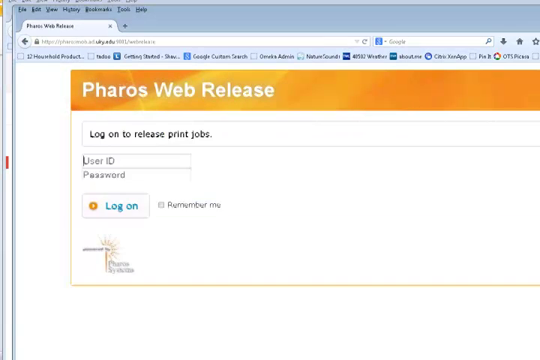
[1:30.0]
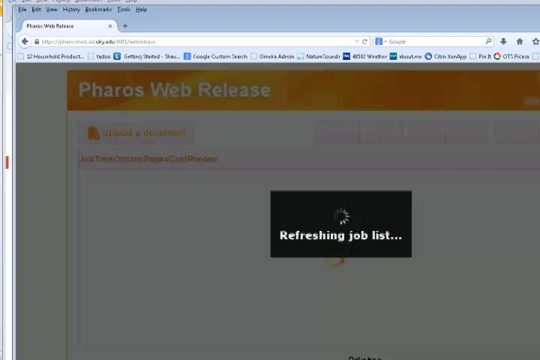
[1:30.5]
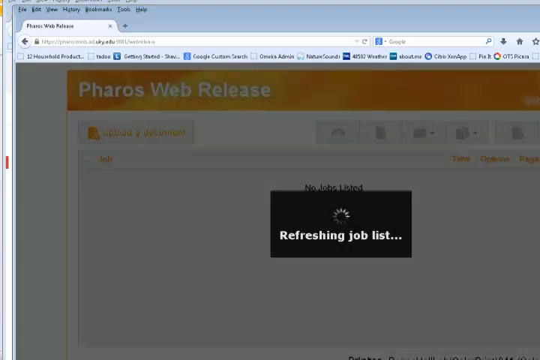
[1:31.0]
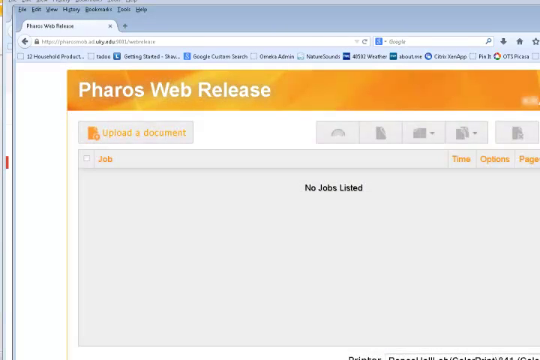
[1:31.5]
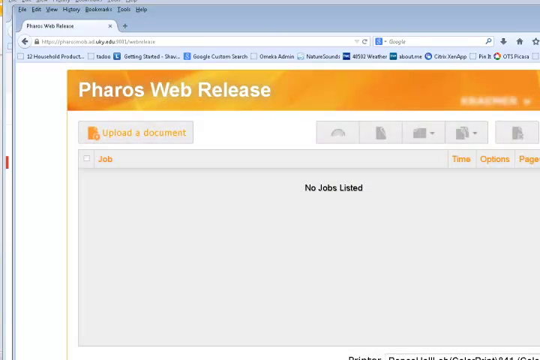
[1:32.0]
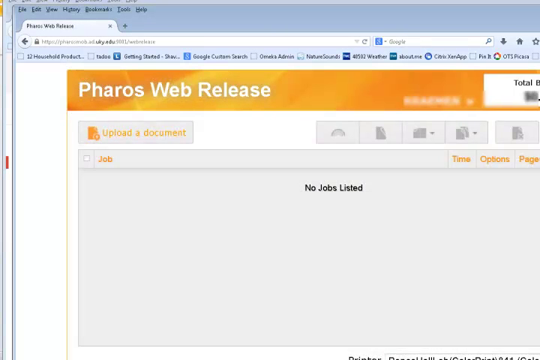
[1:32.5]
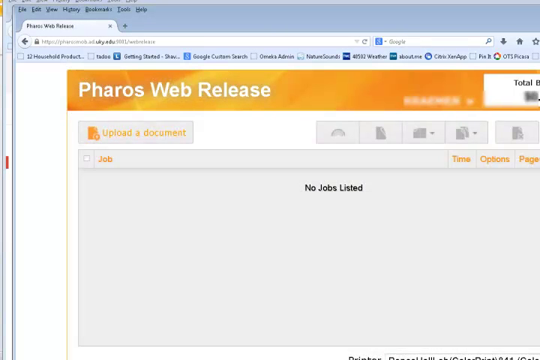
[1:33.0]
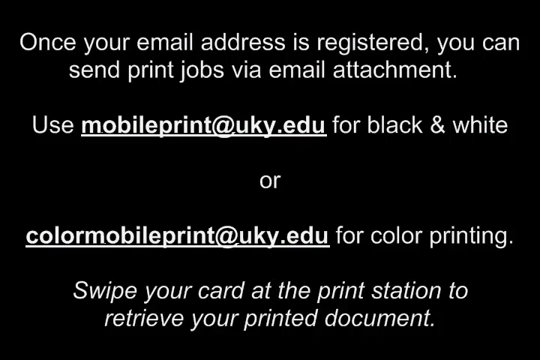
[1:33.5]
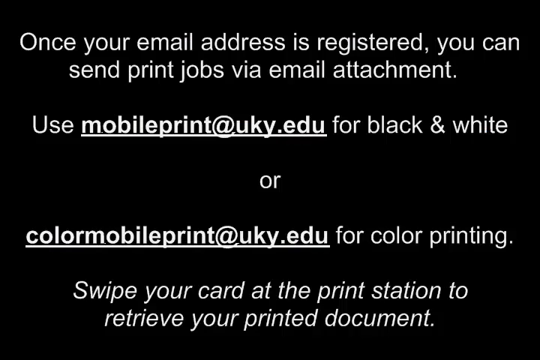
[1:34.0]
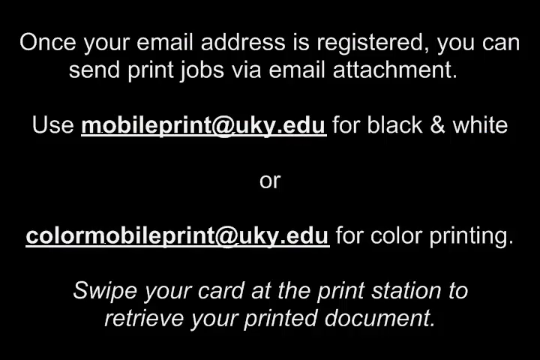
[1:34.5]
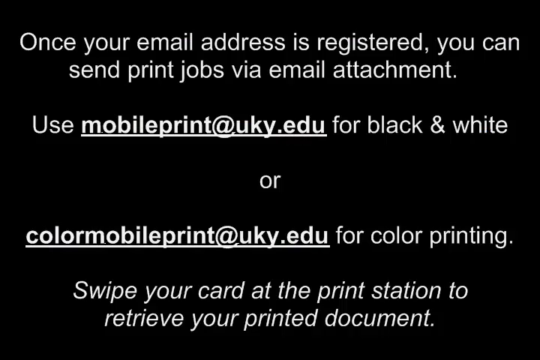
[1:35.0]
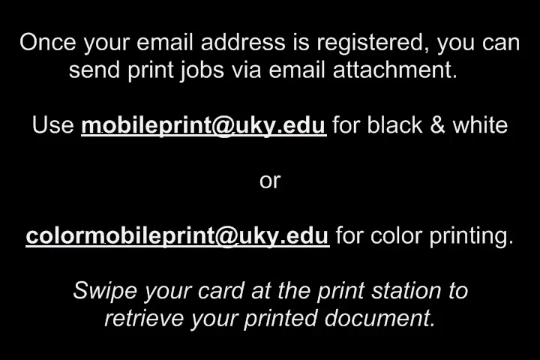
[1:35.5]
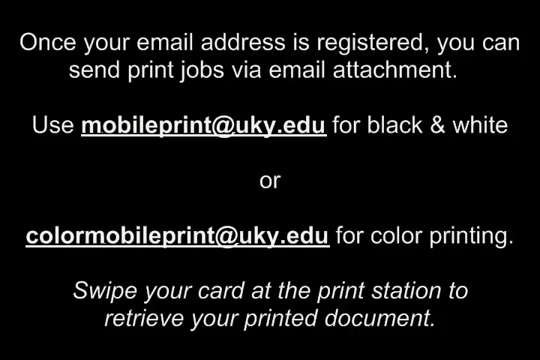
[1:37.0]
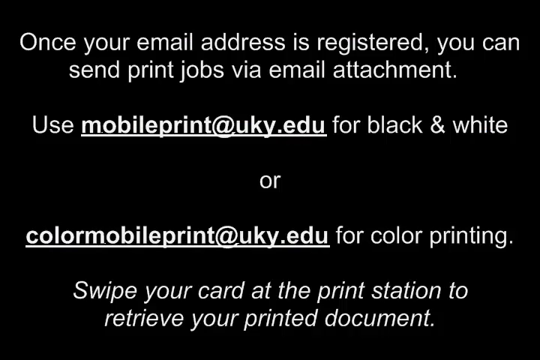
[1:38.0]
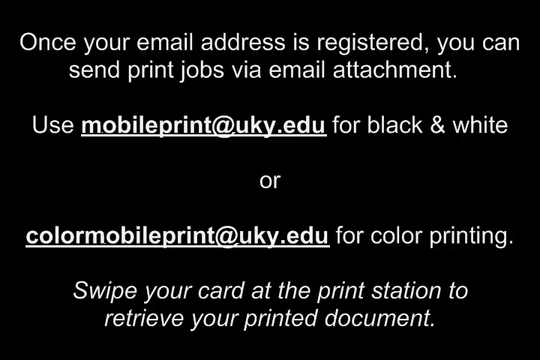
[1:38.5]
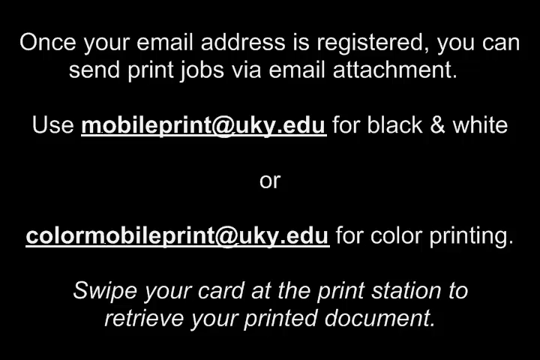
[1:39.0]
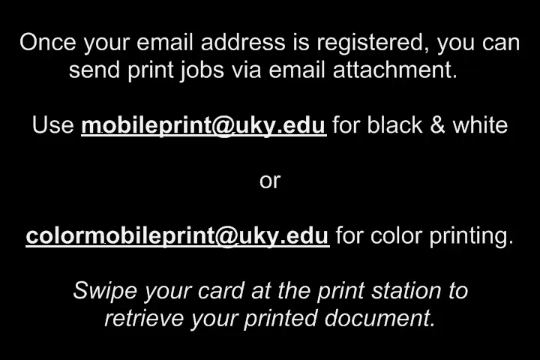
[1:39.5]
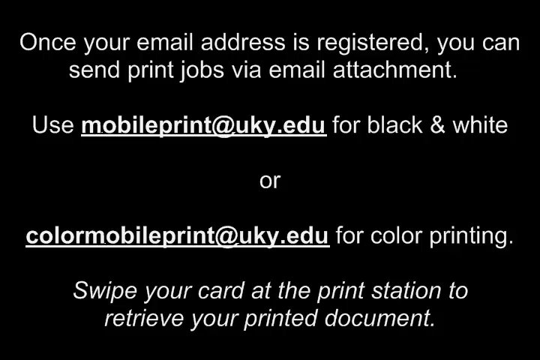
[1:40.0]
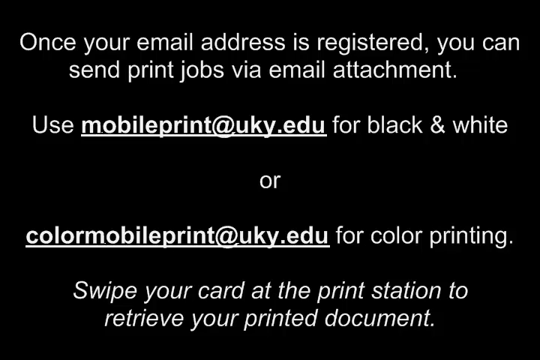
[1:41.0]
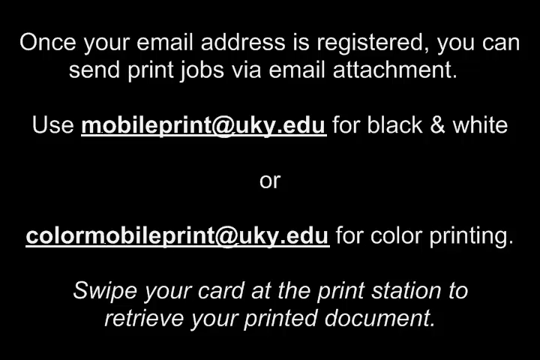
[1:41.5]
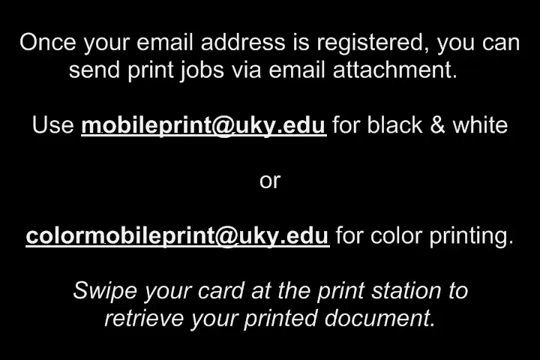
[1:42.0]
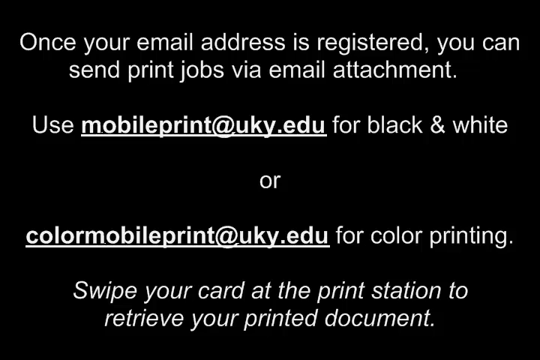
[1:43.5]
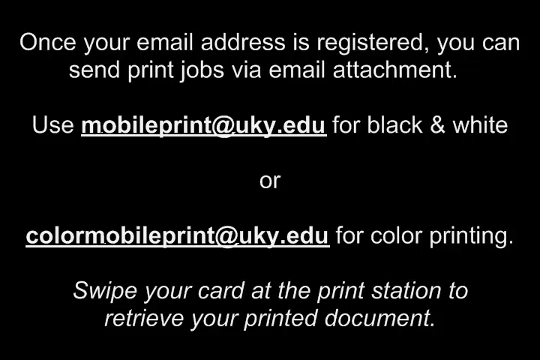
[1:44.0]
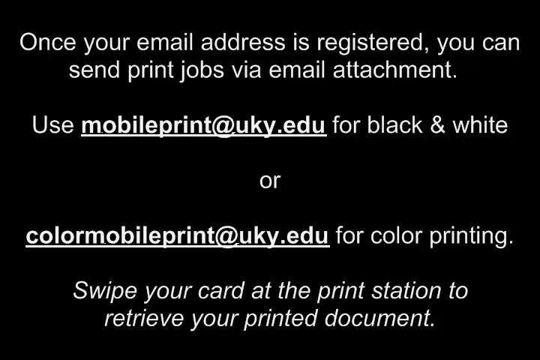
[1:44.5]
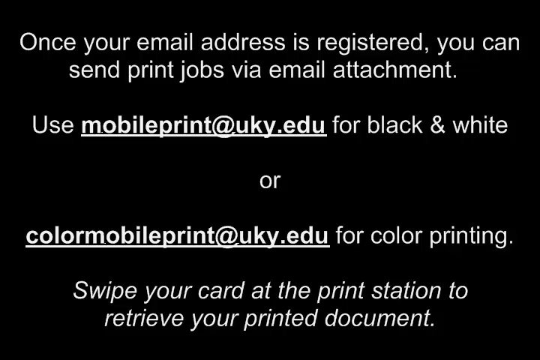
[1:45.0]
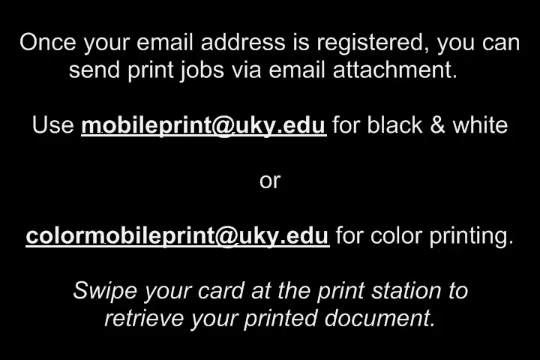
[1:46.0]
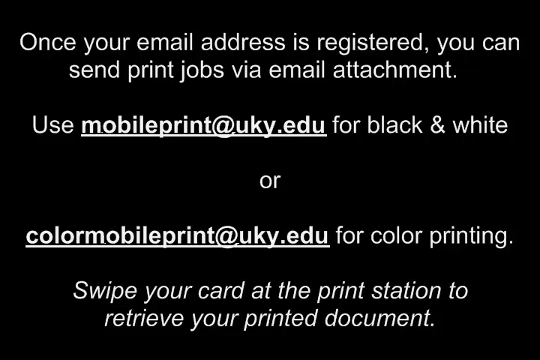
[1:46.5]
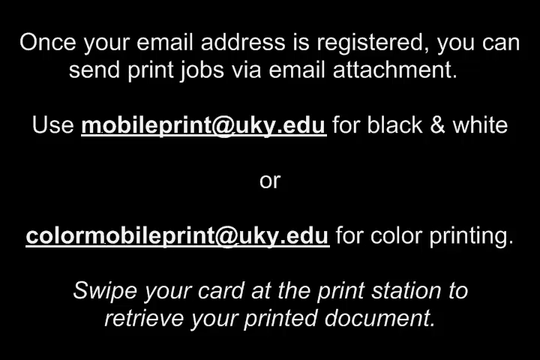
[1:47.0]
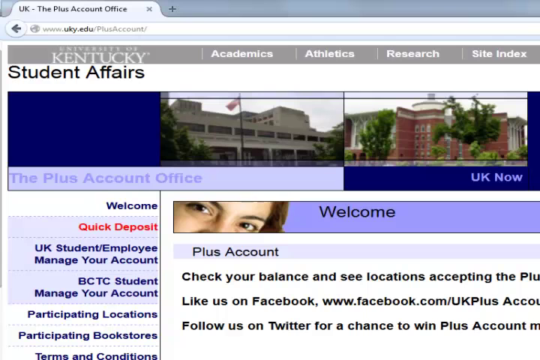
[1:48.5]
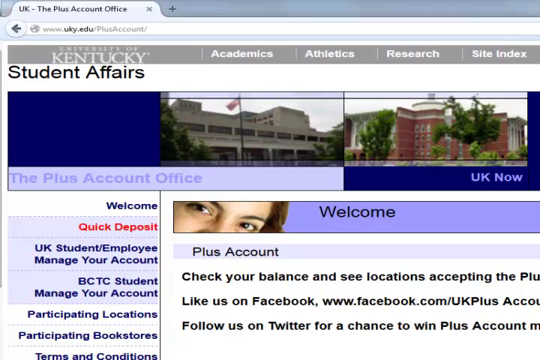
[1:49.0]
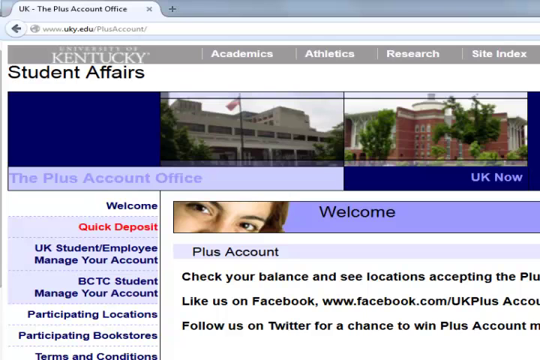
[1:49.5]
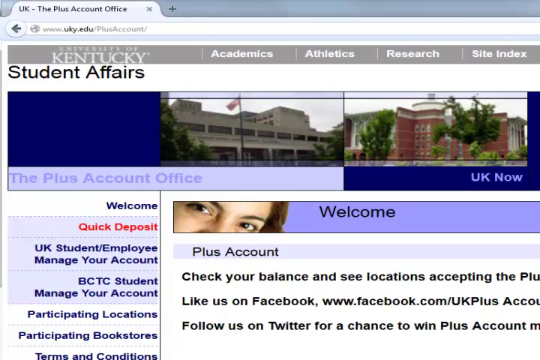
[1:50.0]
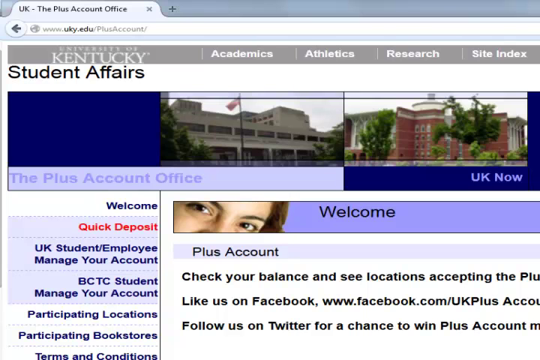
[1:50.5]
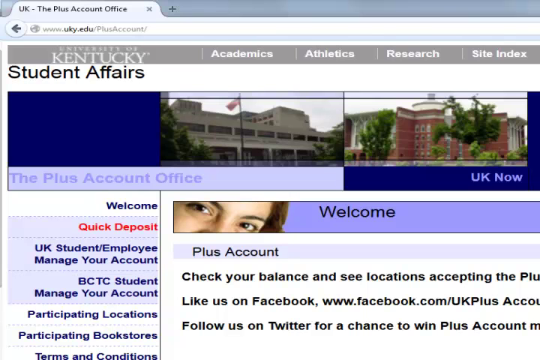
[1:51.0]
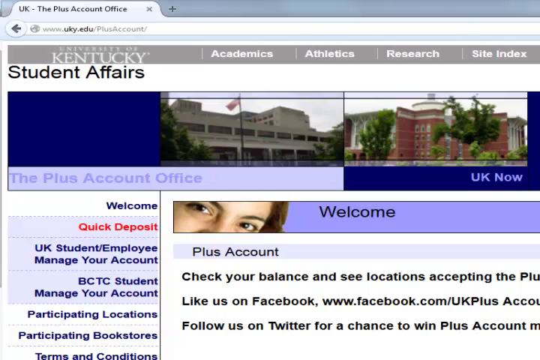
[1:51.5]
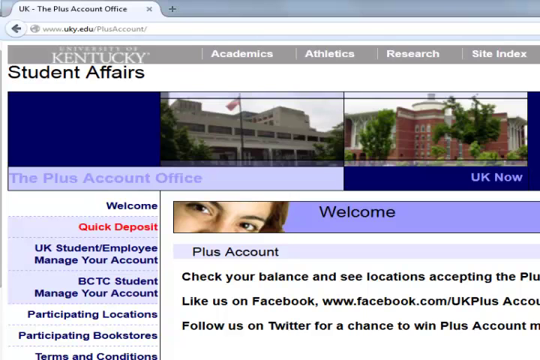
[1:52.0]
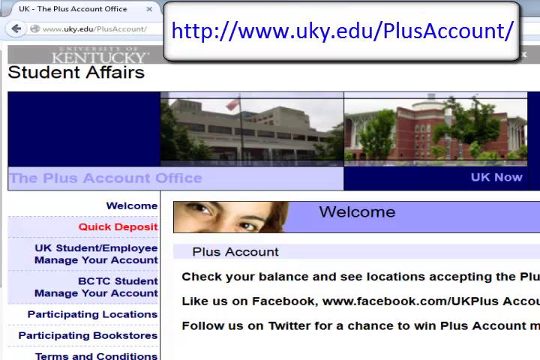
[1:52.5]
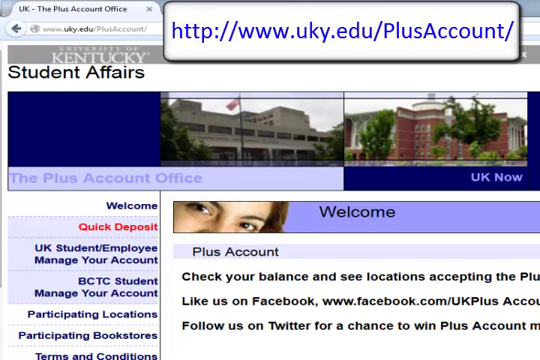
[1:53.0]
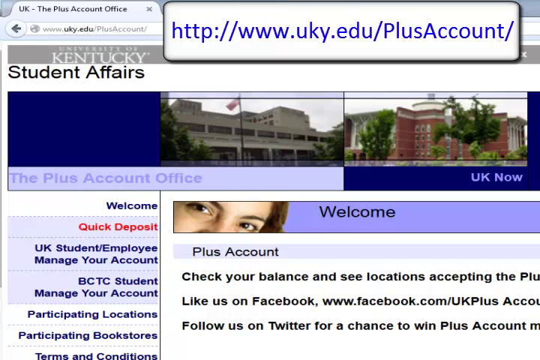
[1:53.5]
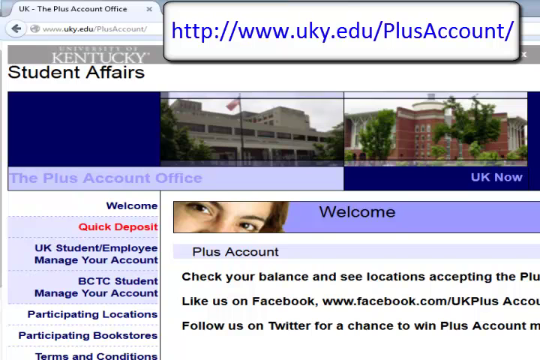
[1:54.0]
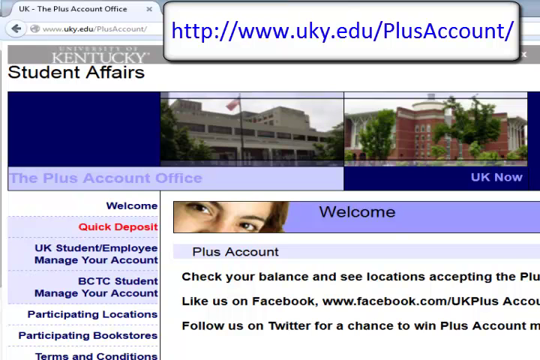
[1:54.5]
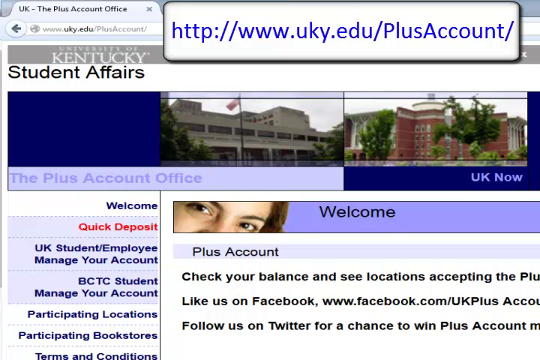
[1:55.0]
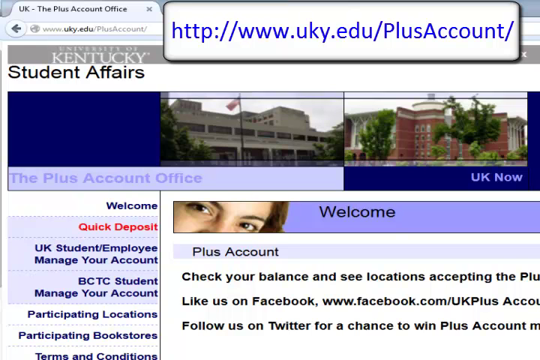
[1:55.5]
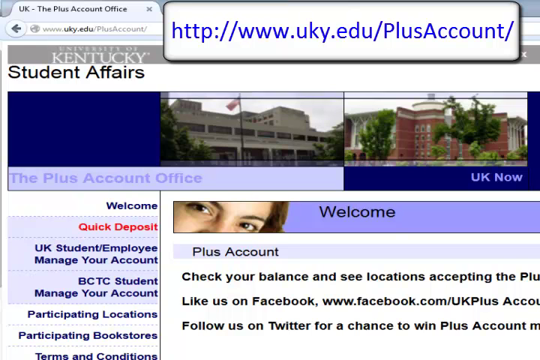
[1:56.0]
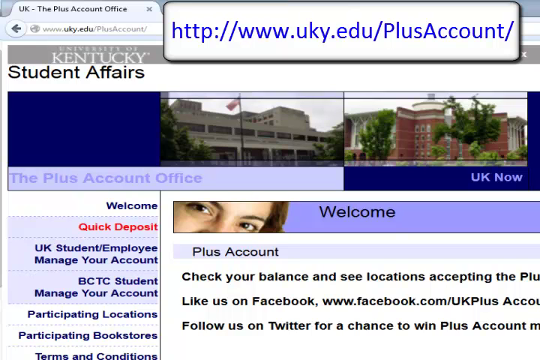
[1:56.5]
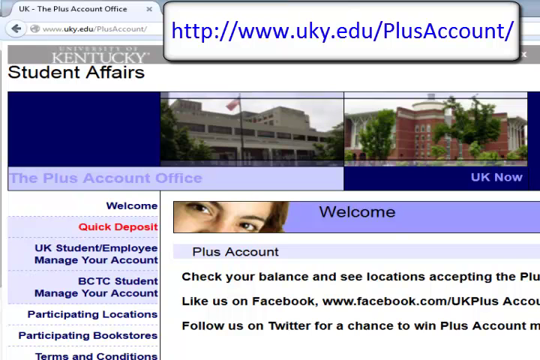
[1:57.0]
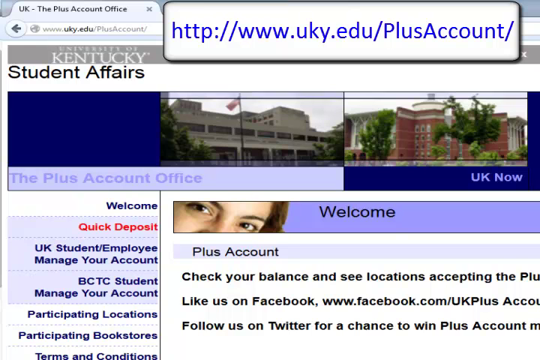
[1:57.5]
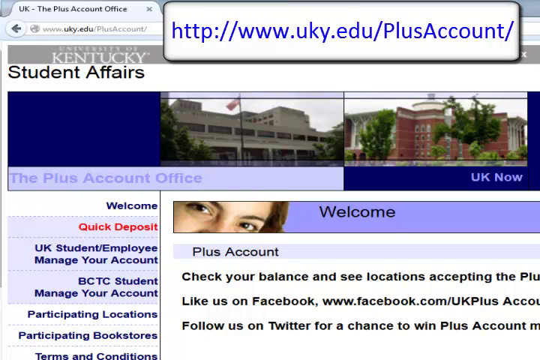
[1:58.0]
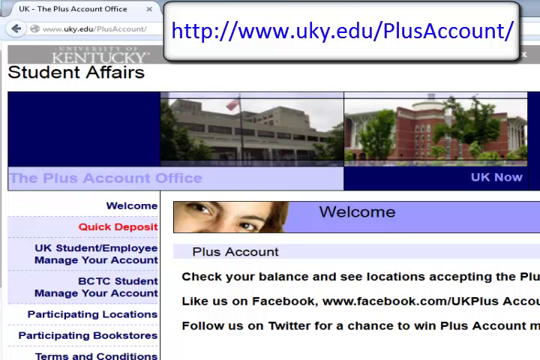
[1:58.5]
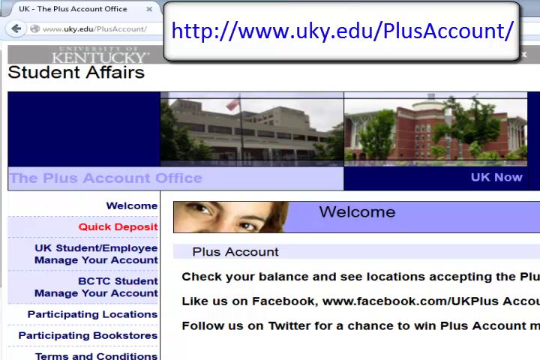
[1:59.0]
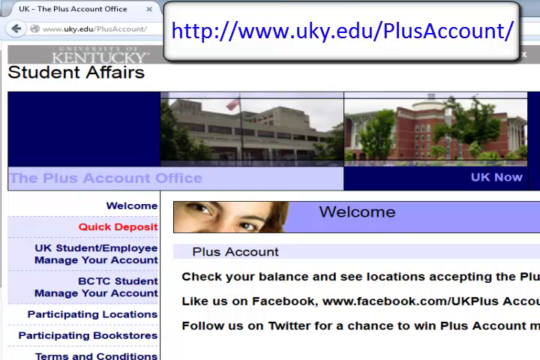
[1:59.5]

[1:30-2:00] The how-to video on registering for mobile printing at the University of Kentucky Library shows a website with an email section, on the Pharos web release page. A window that has popped up says "log on to release print jobs"; at its top is an orange banner with a little yellow design and "Pharos web release" in white font. The person enters their user ID, then refreshes the window, which says "no jobs listed". Next comes a black screen with centered white writing: "once your email address is registered, you can send print jobs via email attachment. Use mobileprint@uky.edu for black and white or color mobile print." The video then cuts to another website reading "University of Kentucky Student Affairs" with "Welcome, plus account. Check your balance and see locations accepting the", the rest cut off.